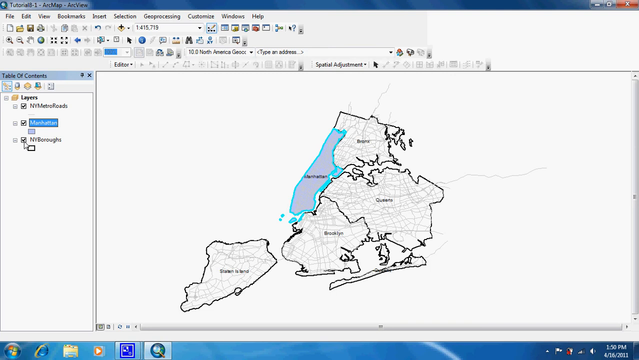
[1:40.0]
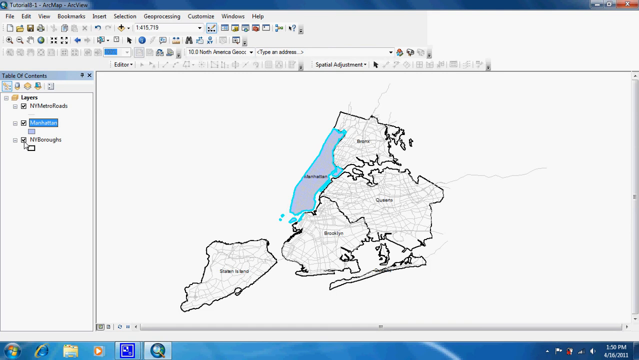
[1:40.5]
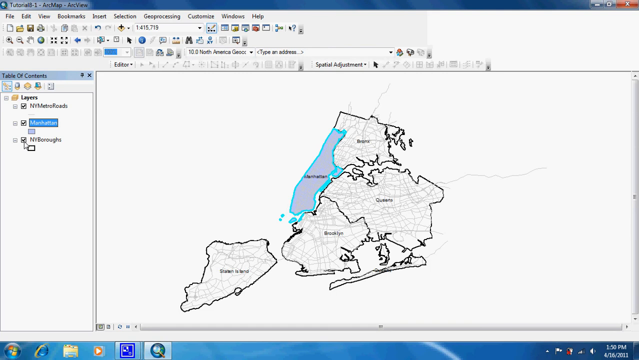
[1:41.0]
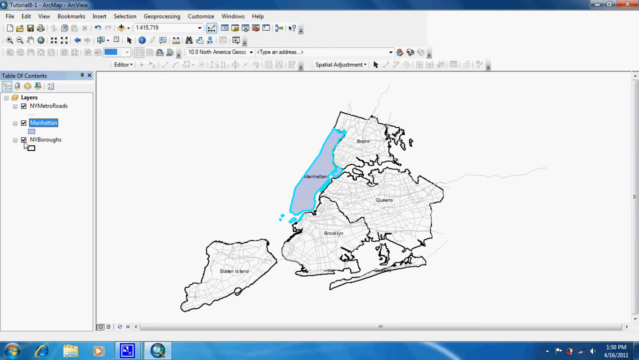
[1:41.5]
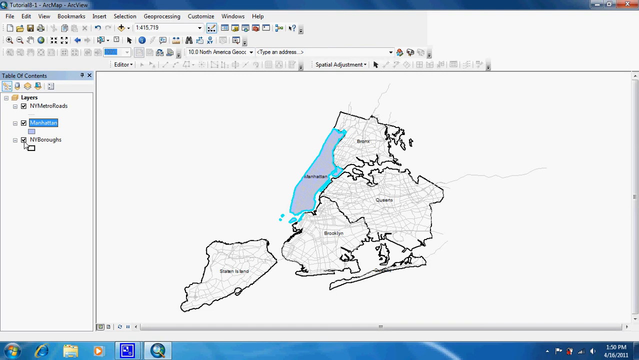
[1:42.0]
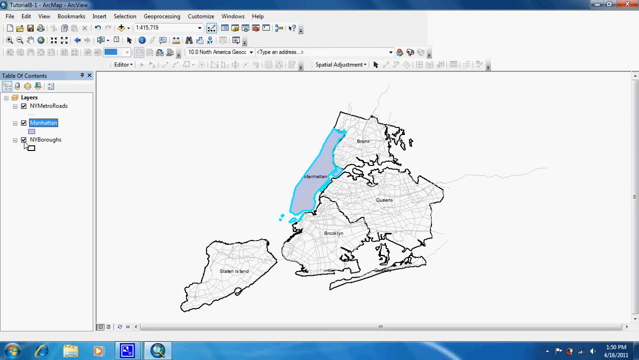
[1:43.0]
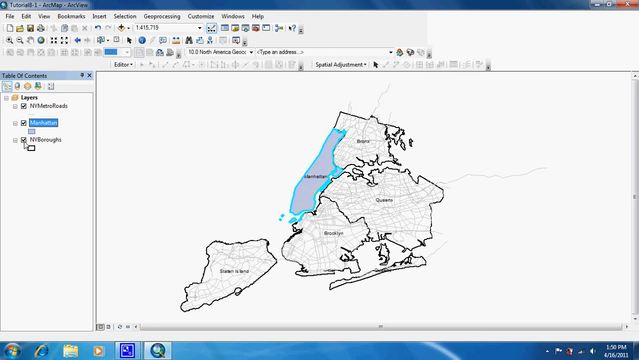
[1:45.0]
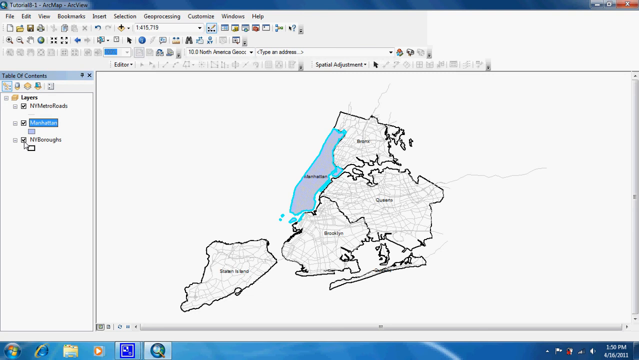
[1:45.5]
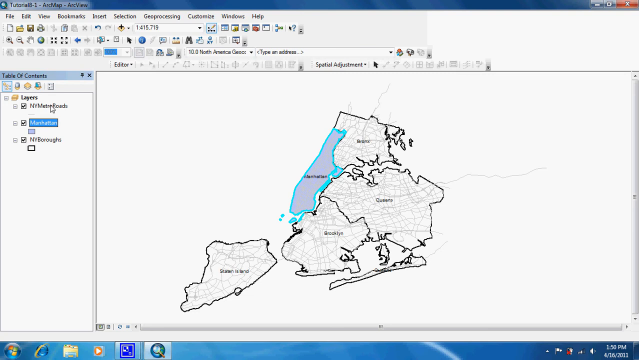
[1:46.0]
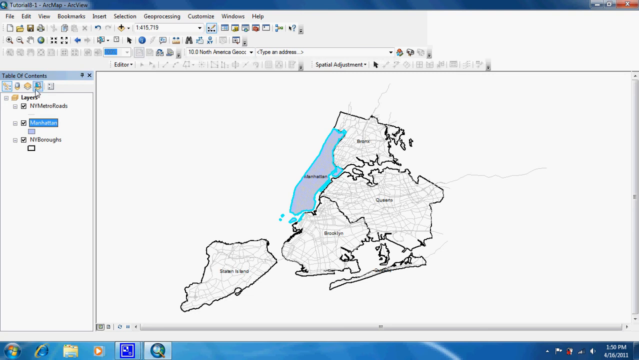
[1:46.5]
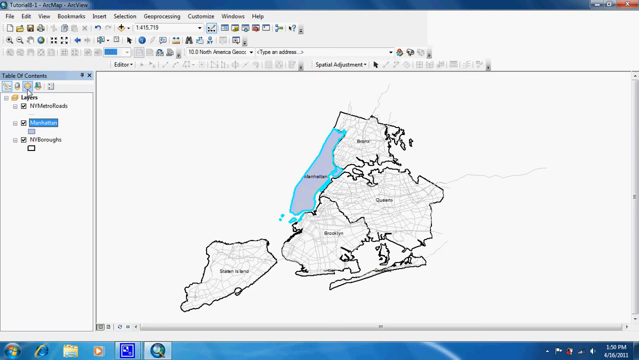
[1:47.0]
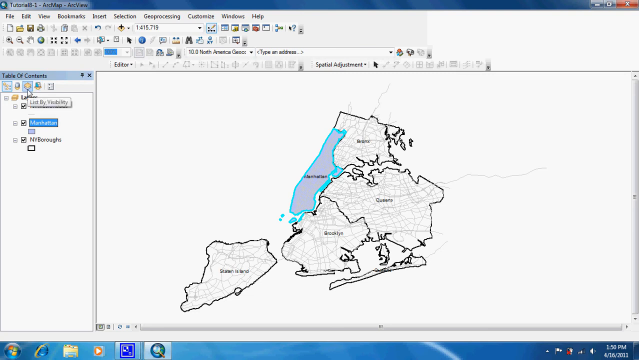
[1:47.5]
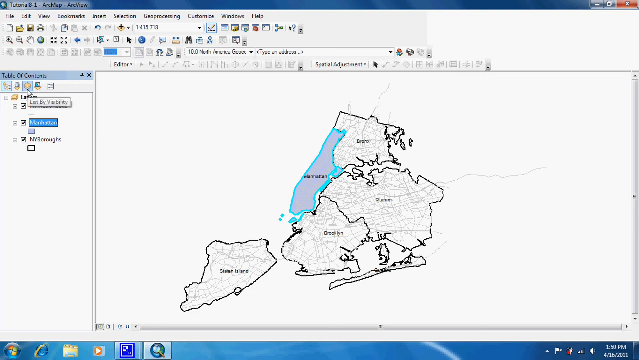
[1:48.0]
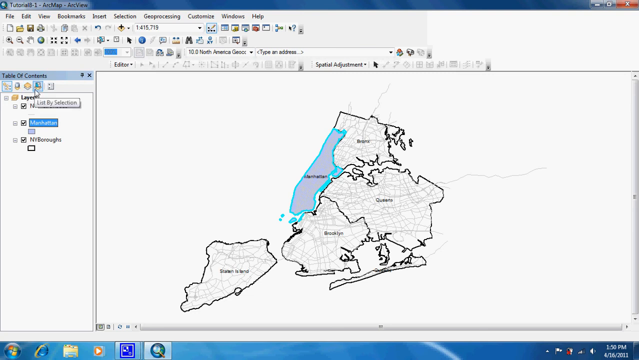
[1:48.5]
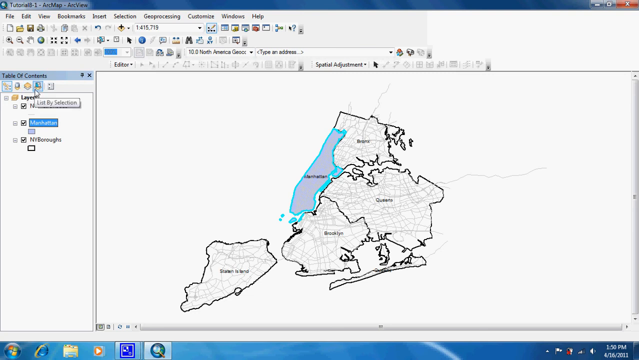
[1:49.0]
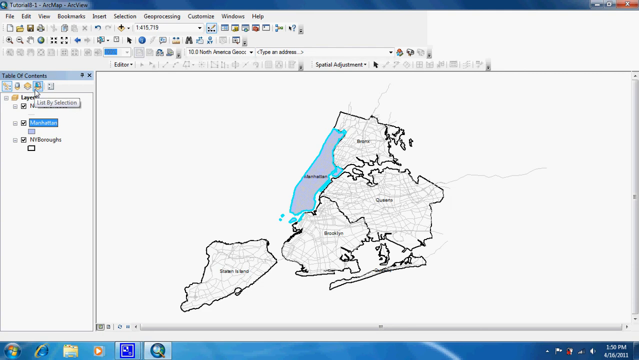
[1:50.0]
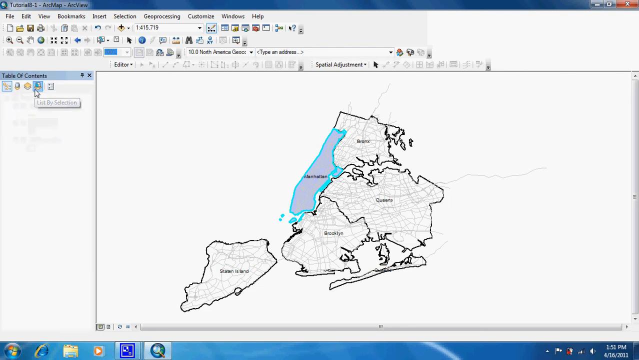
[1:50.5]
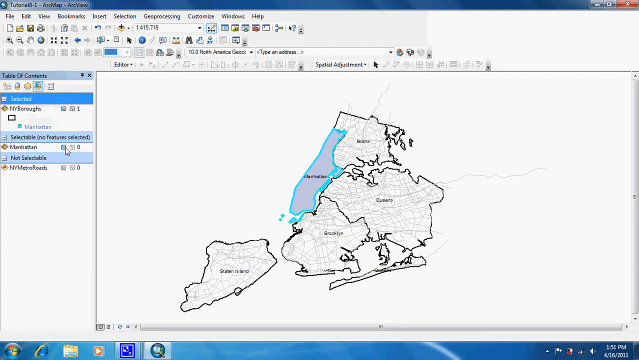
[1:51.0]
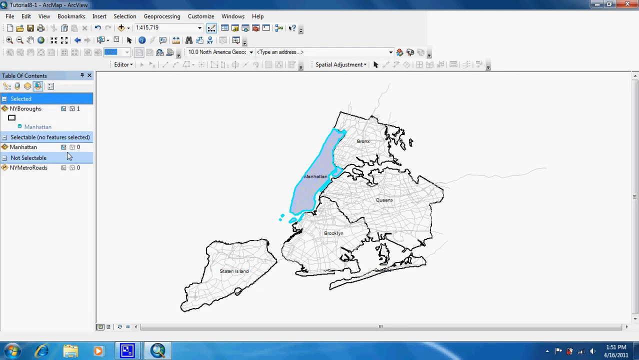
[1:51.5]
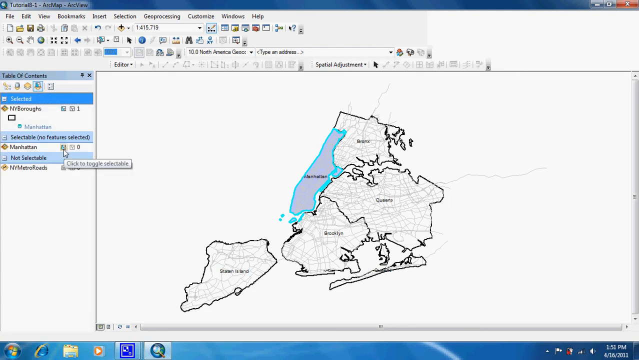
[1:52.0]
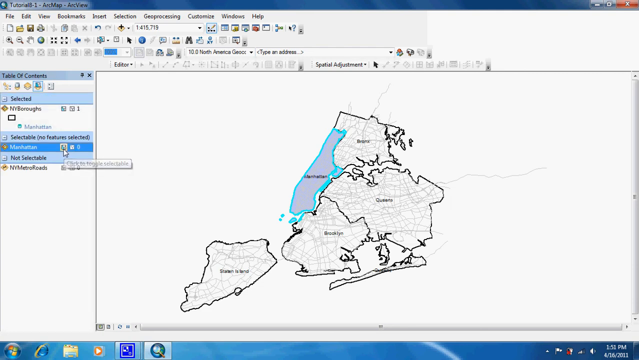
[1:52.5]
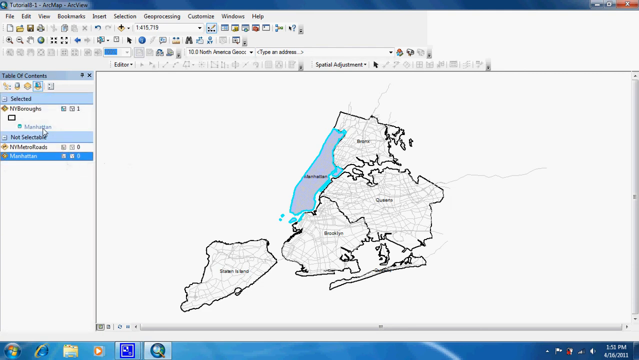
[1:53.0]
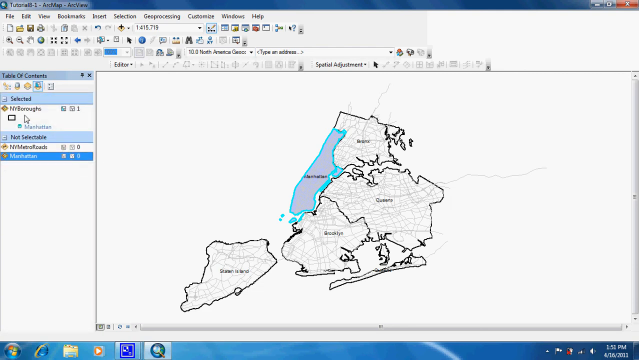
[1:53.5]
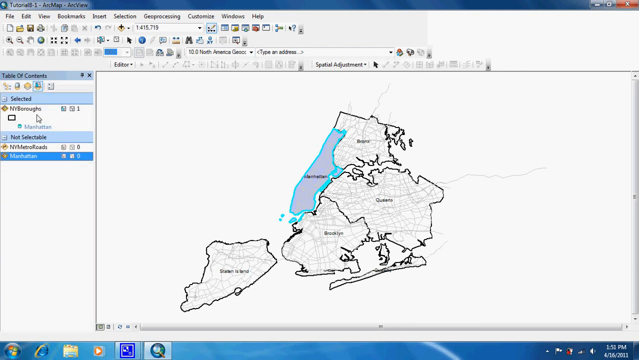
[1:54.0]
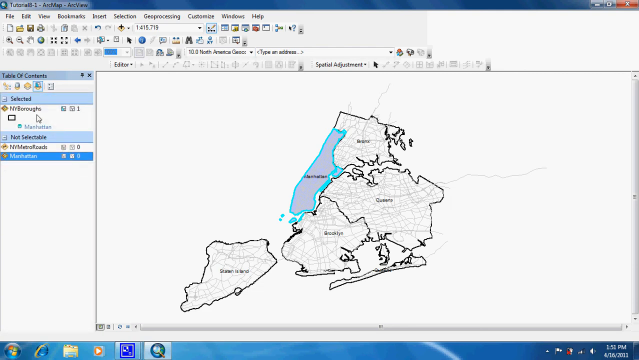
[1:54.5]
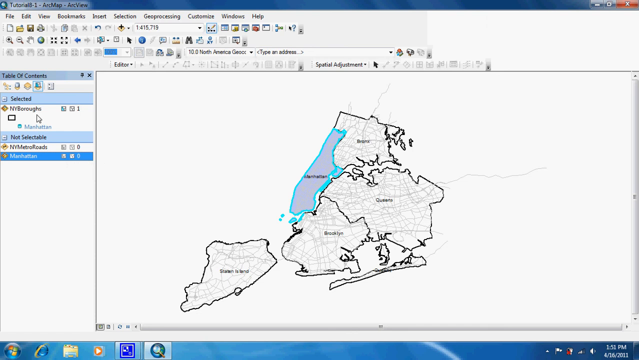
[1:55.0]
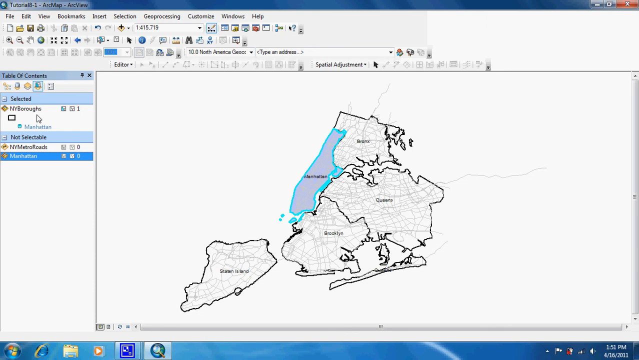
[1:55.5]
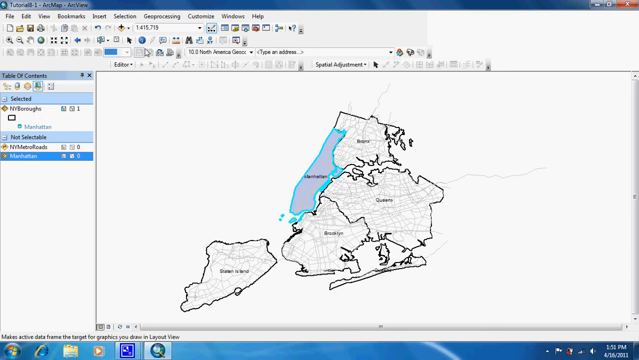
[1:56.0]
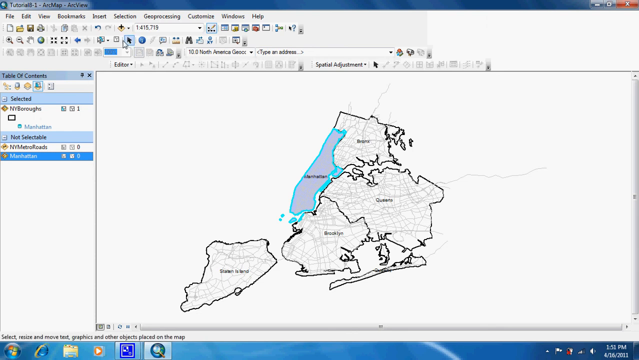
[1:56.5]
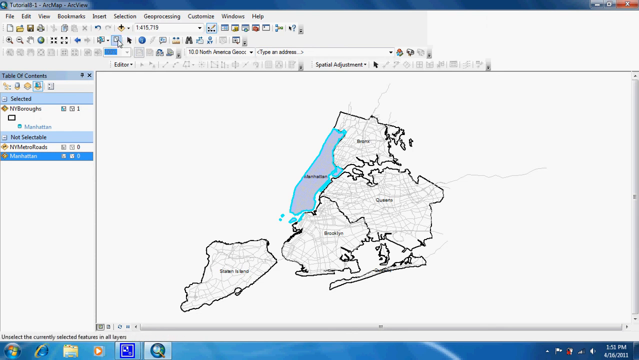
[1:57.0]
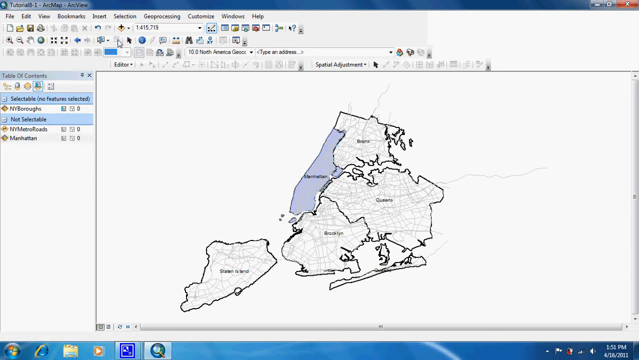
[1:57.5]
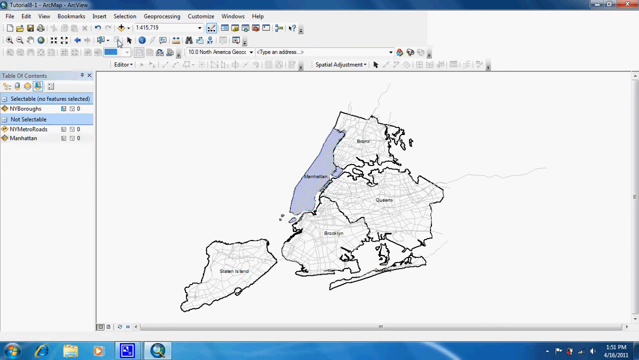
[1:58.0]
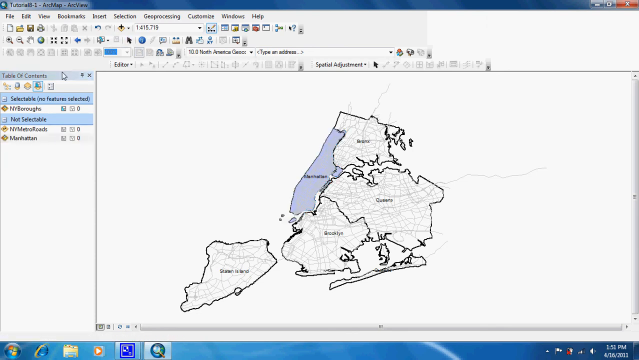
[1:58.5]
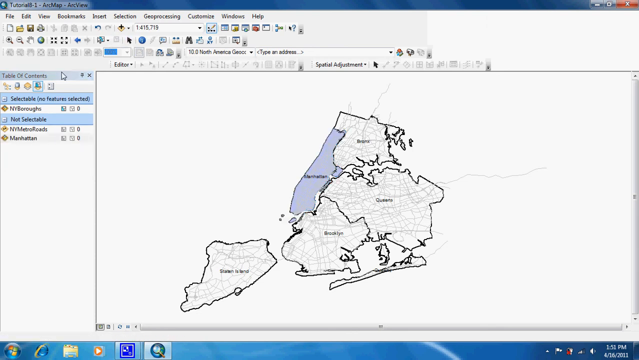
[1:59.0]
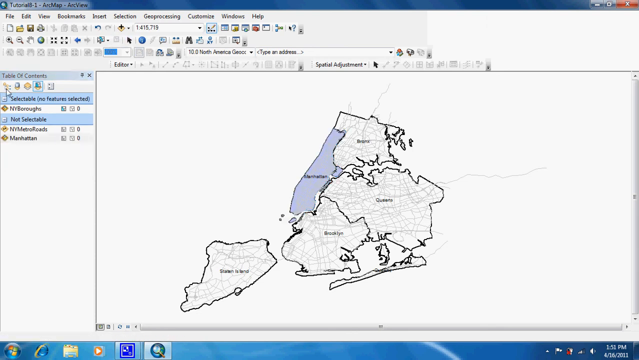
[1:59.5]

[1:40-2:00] The map remains in the main pane. In the left pane is "Table of Contents", and under "Selected" is "New York Boroughs". The mouse pointer moves up toward the toolbars, and the map appears to get a little larger. The pointer returns to the left pane and stays there, barely moving, hovering over a couple of icons beneath "Table of Contents"; hovering over one shows its name, "List by Selection". That button apparently gets clicked, and Manhattan is selected, with "New York Boroughs" under "Selected". The pointer then goes back up to the toolbar and clicks one of the icons.